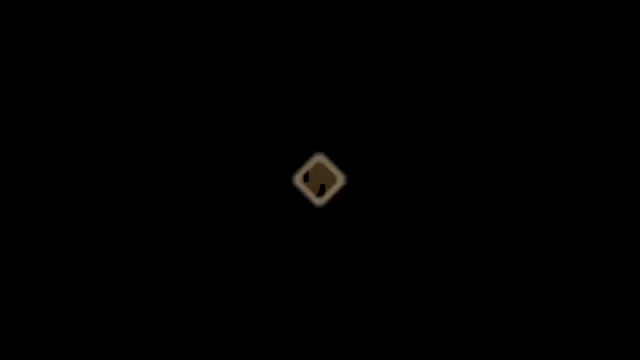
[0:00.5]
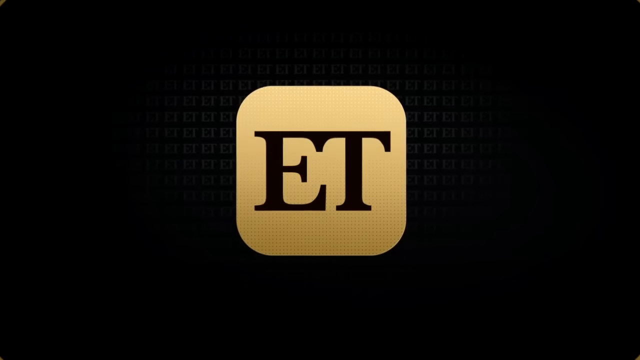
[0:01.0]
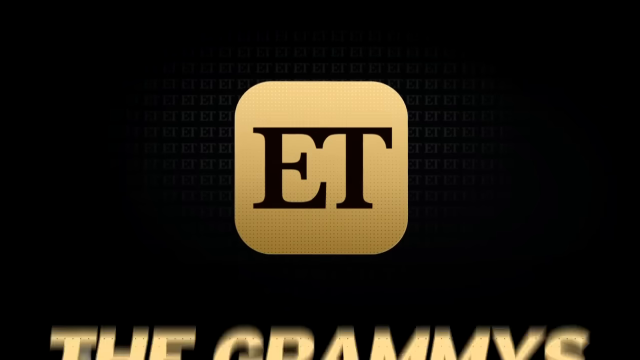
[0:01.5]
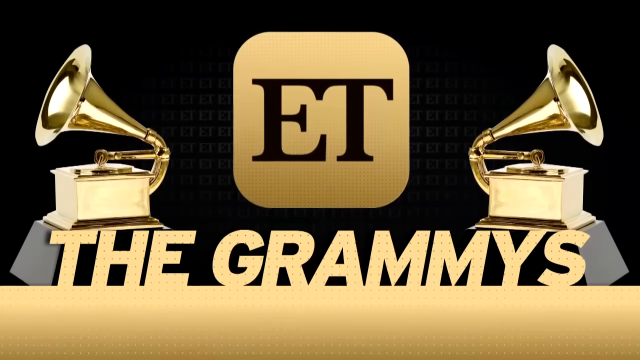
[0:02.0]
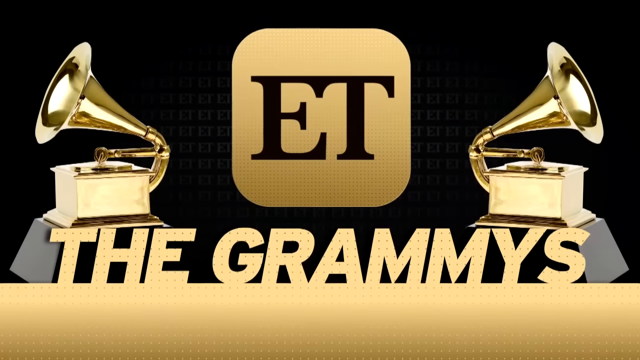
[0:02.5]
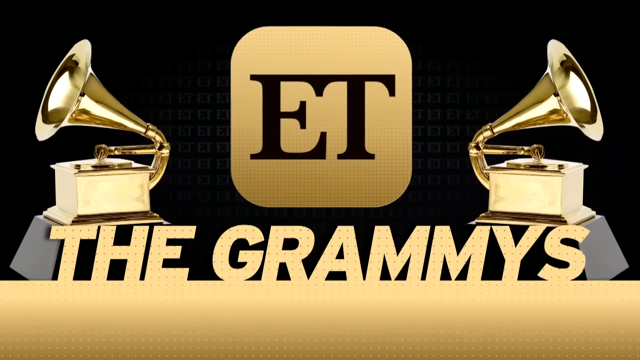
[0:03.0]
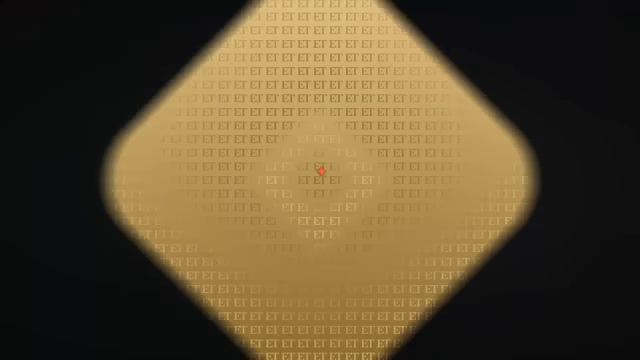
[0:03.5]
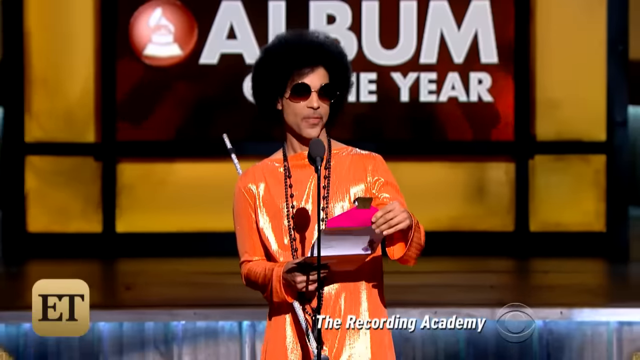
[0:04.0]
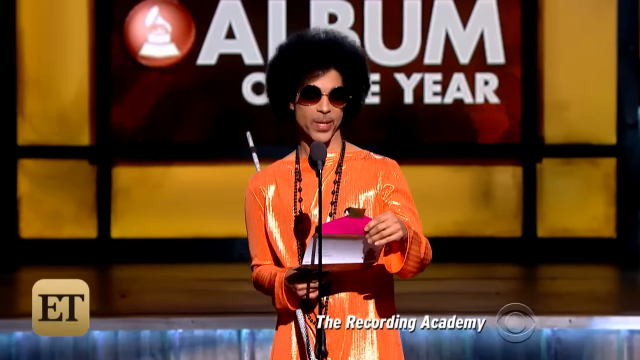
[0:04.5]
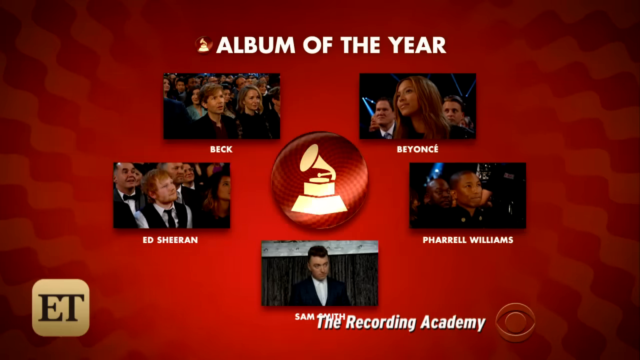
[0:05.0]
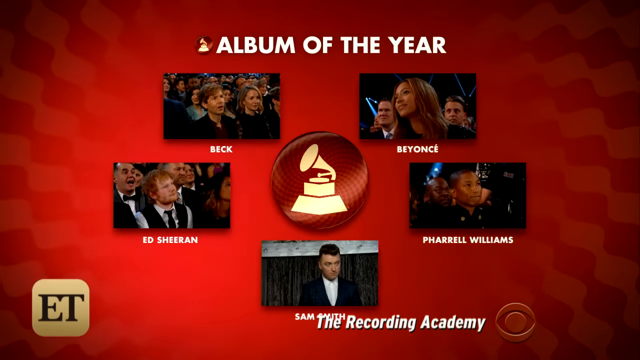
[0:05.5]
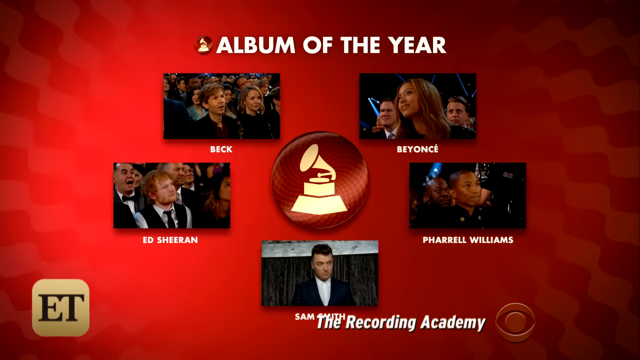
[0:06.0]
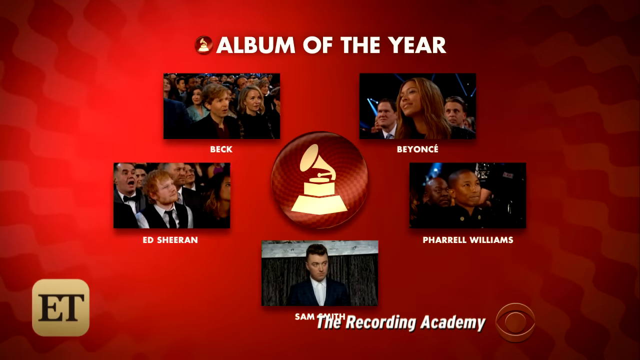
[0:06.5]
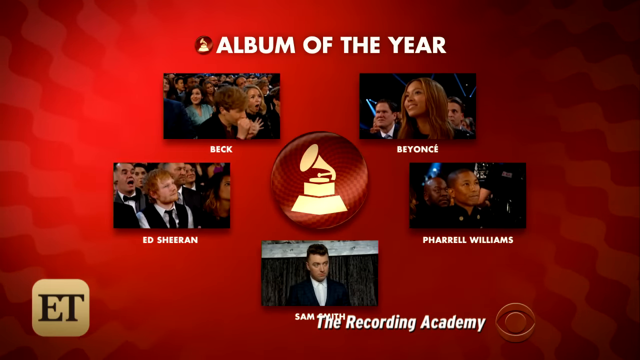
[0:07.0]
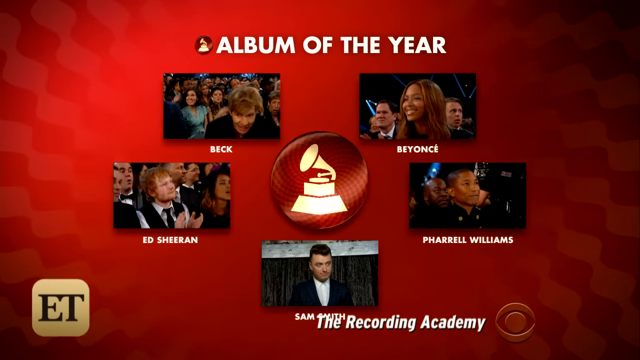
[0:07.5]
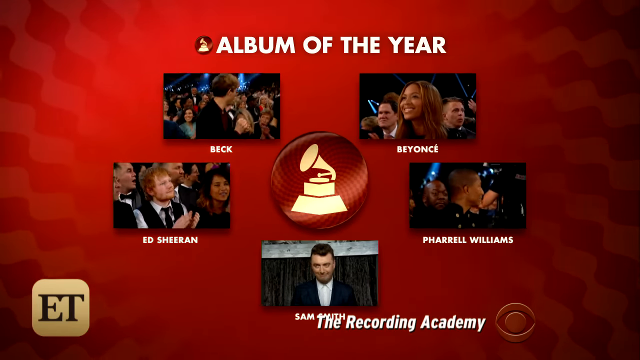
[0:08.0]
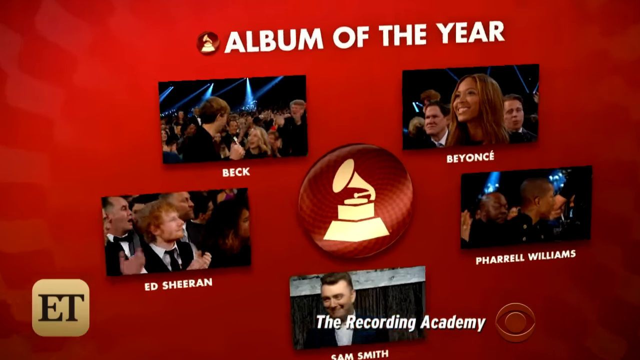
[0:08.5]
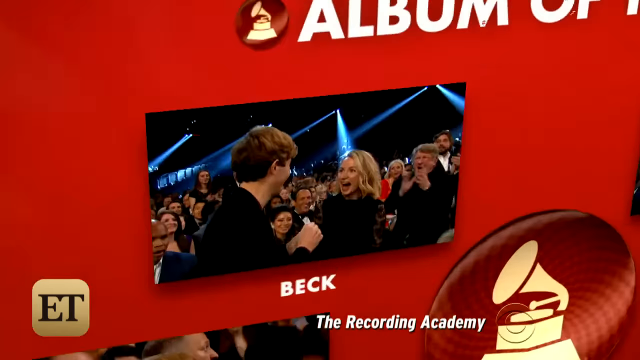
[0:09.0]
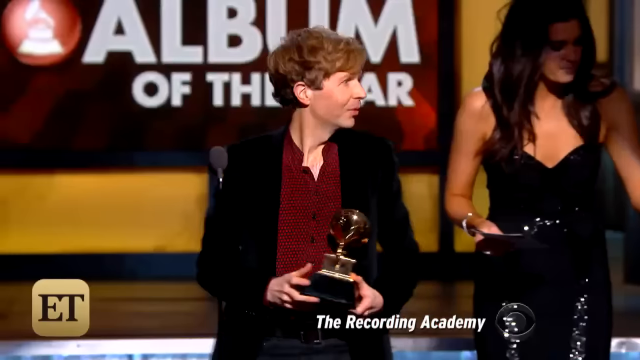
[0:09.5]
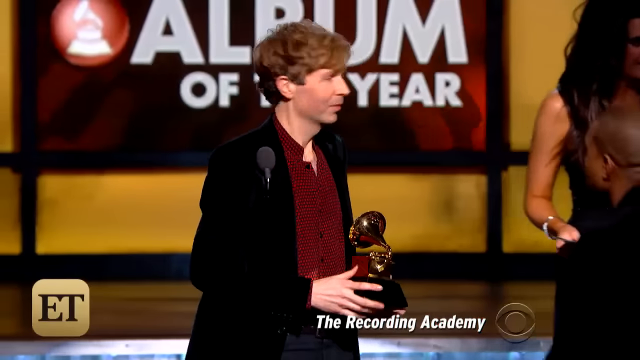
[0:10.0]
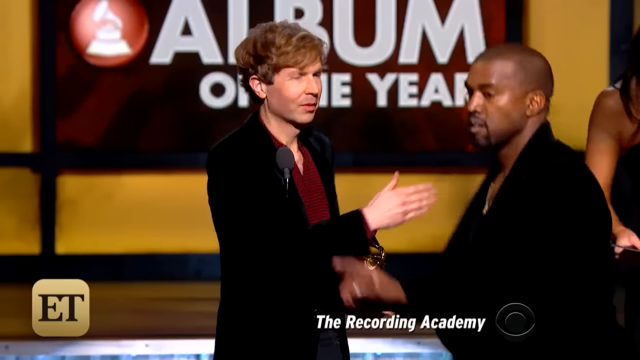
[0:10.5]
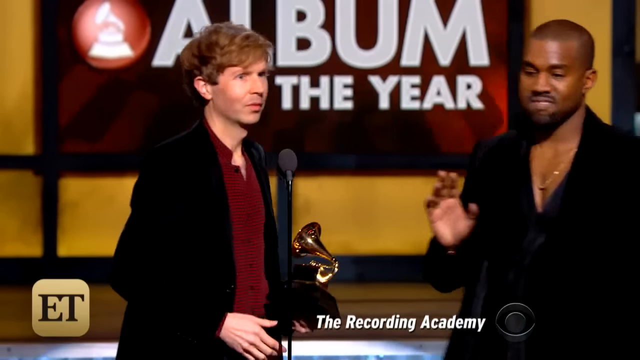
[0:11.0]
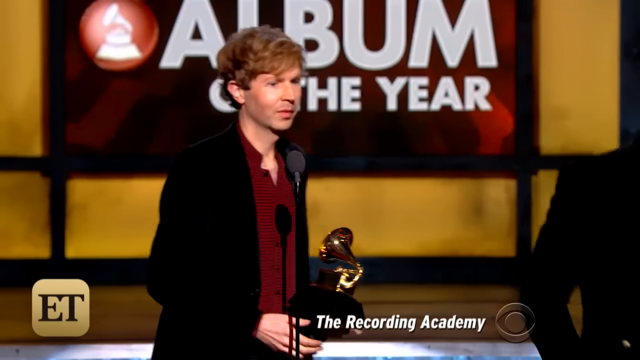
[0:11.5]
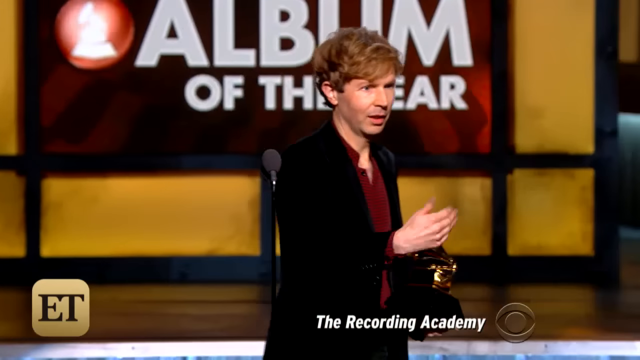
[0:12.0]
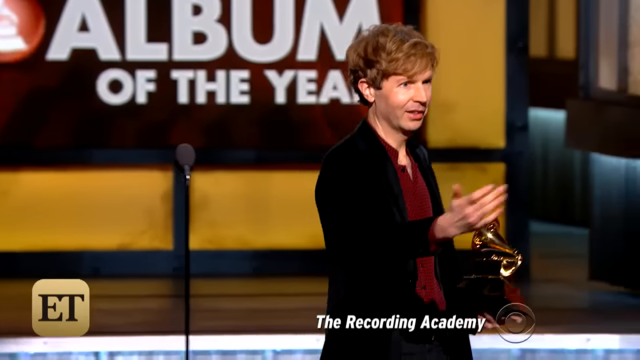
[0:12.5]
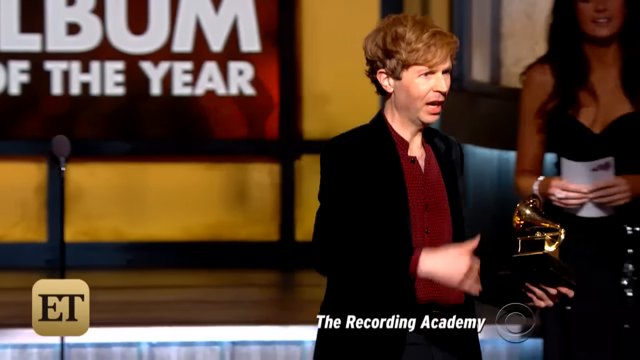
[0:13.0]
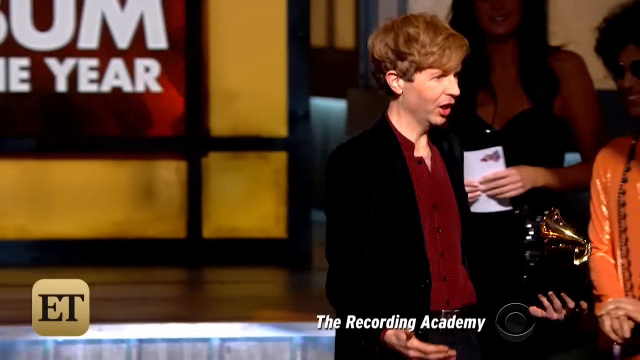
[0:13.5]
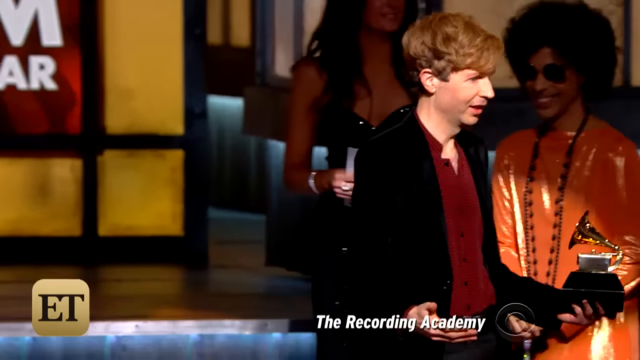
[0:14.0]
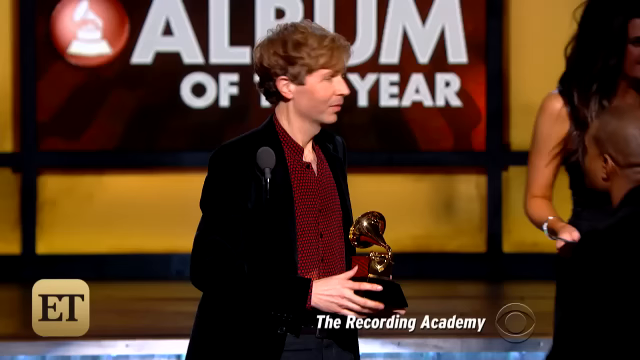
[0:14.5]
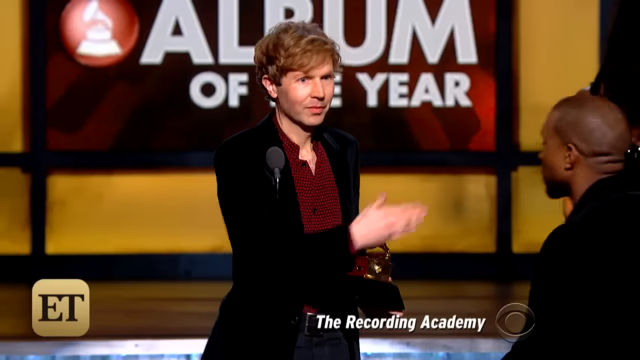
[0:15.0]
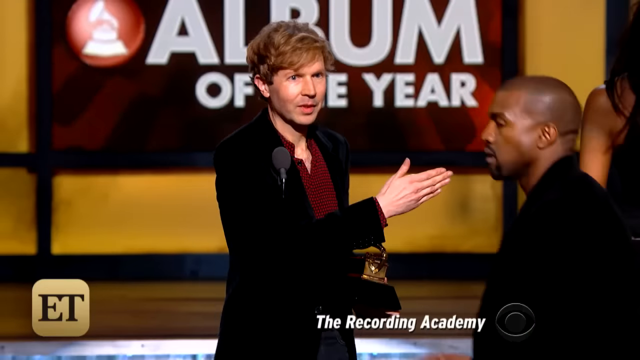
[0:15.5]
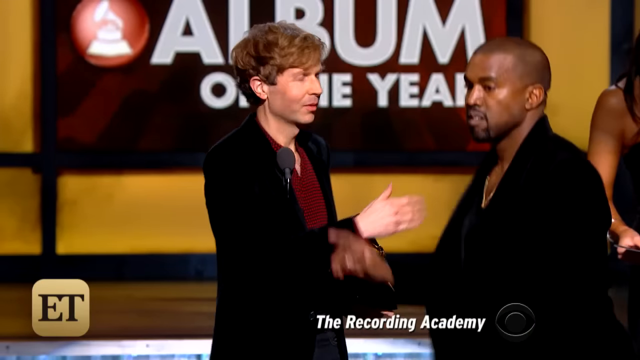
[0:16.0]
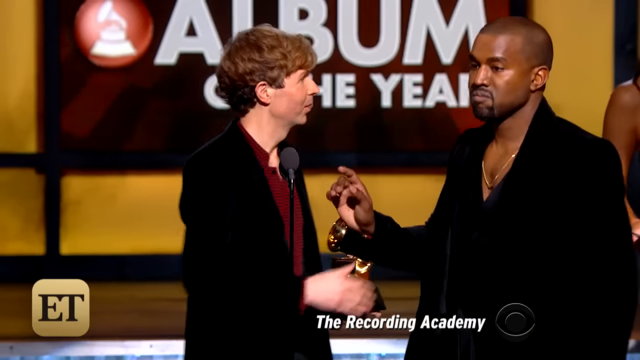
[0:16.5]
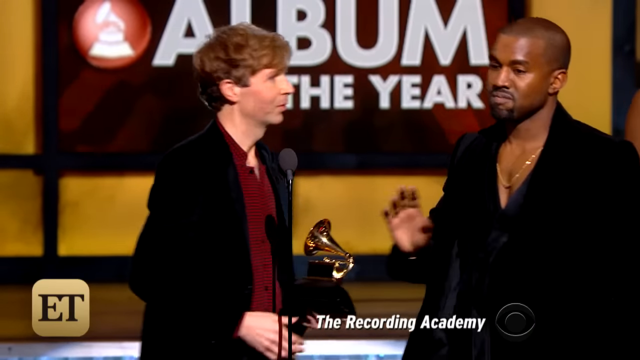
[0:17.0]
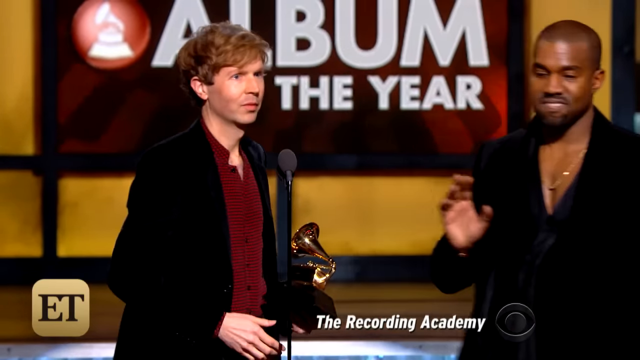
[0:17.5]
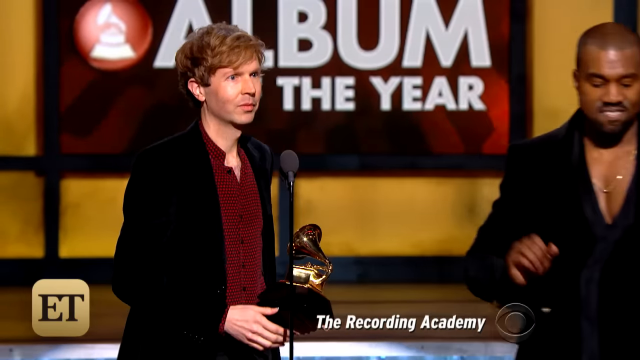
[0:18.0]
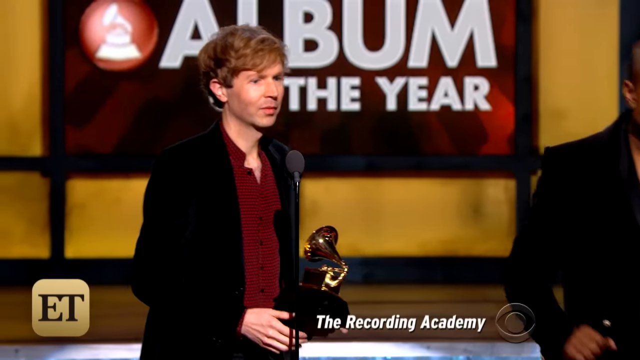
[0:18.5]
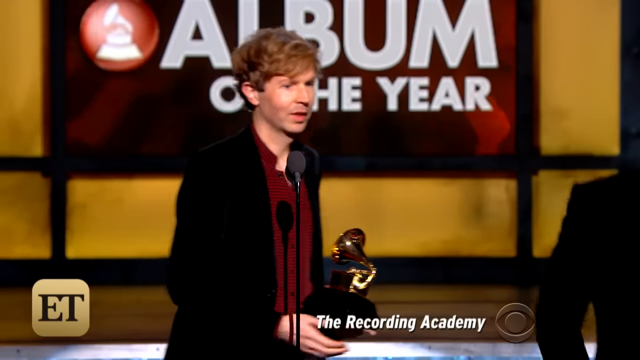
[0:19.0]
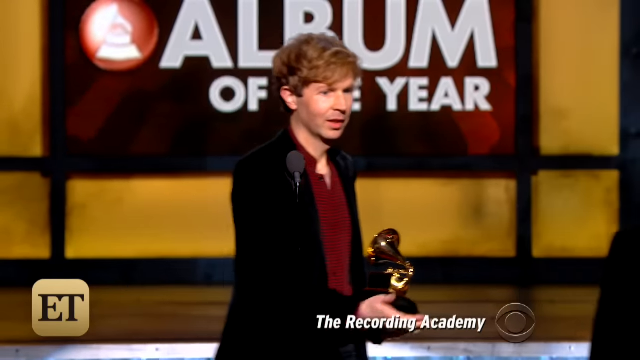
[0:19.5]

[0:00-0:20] ET and the Grammy Awards are shown. Someone who looks like Prince presents Album of the Year, and then the video highlights someone coming up on stage holding the Grammy. Someone else comes up, apparently Kanye, who looks like he wants to say something, and then he goes off the screen. The sequence then seems to repeat: the person who won is on the stage with the Grammy in his hand, and Kanye West comes up and interrupts them for a moment.